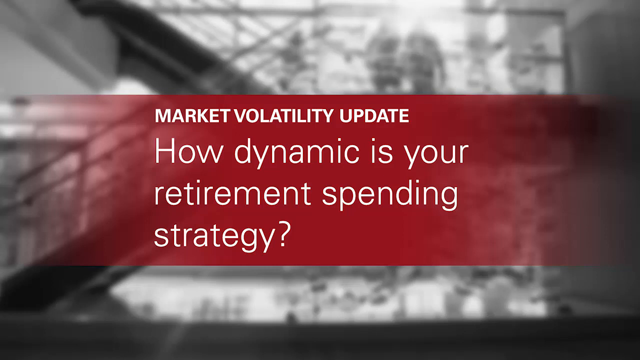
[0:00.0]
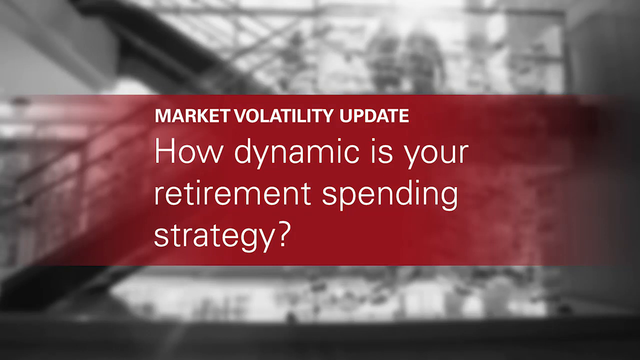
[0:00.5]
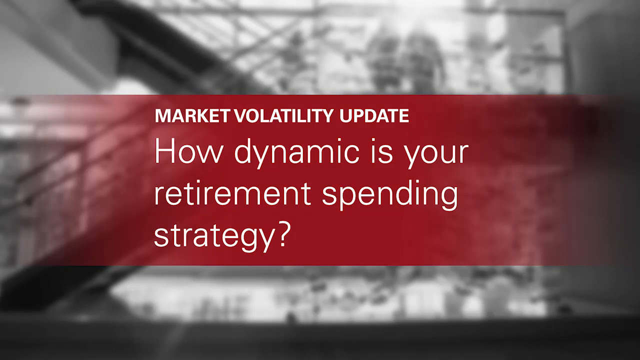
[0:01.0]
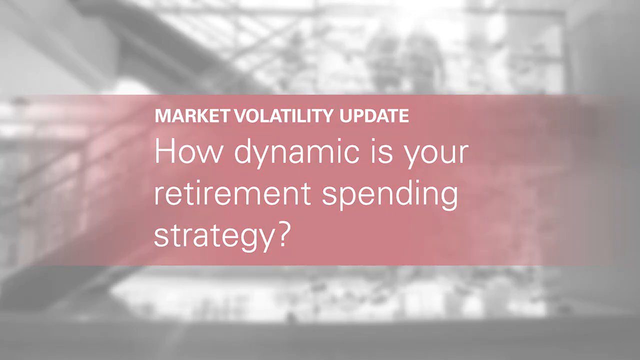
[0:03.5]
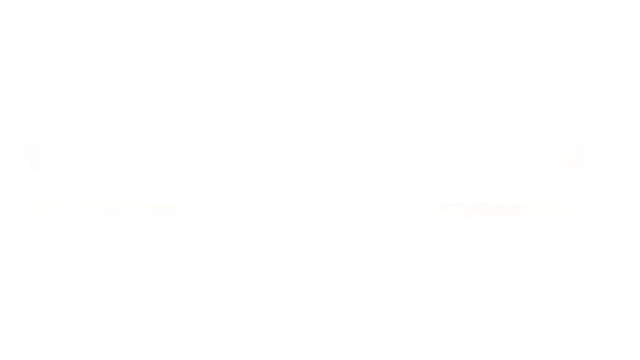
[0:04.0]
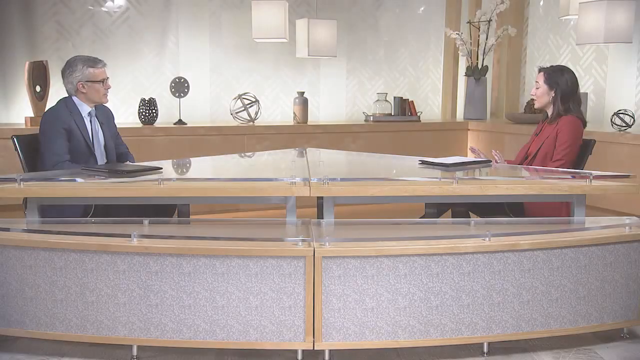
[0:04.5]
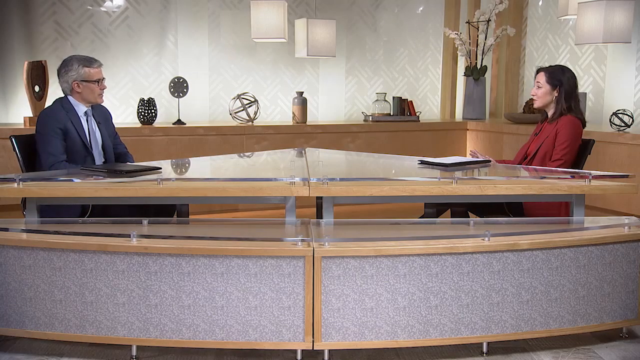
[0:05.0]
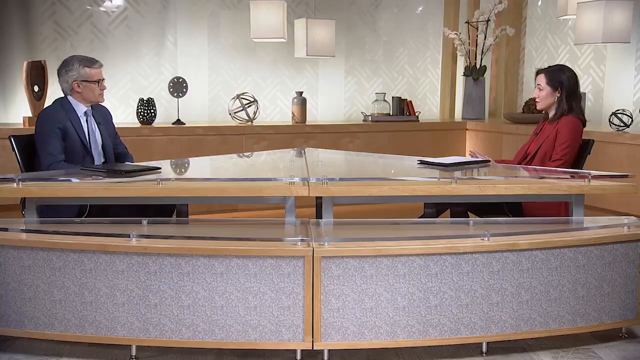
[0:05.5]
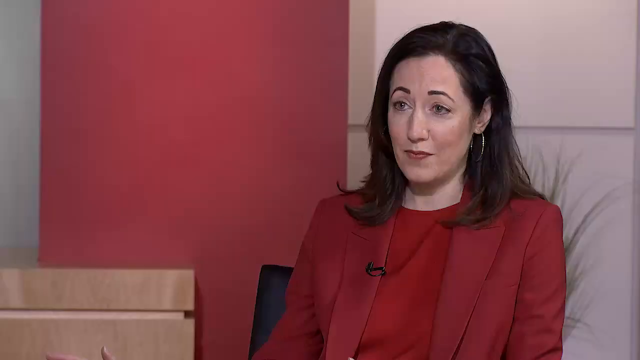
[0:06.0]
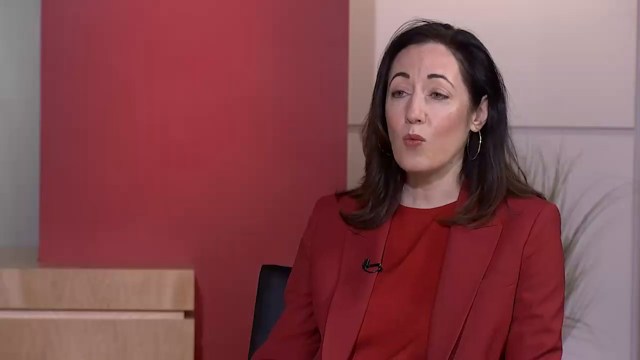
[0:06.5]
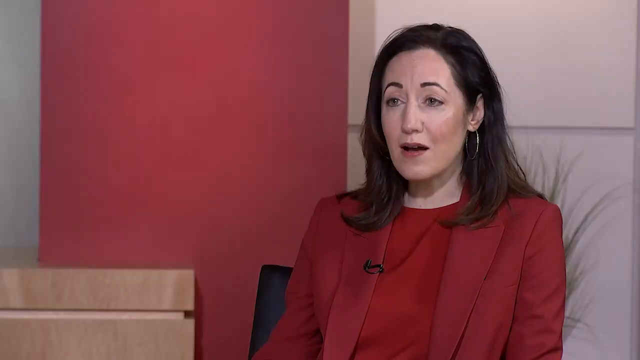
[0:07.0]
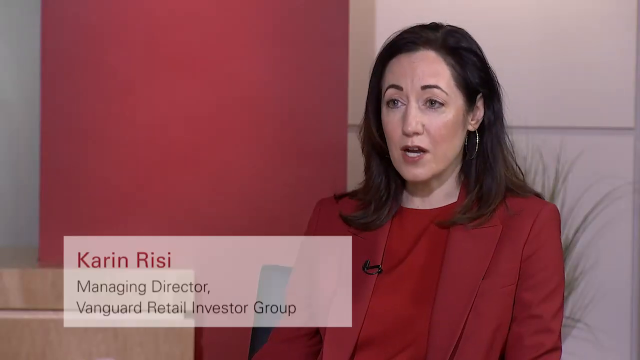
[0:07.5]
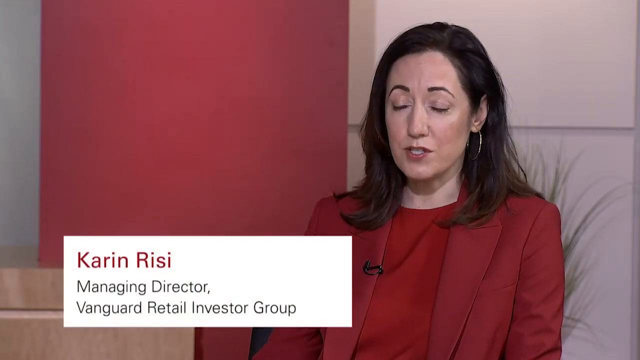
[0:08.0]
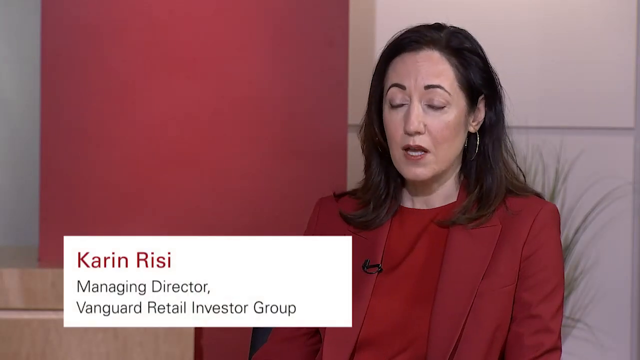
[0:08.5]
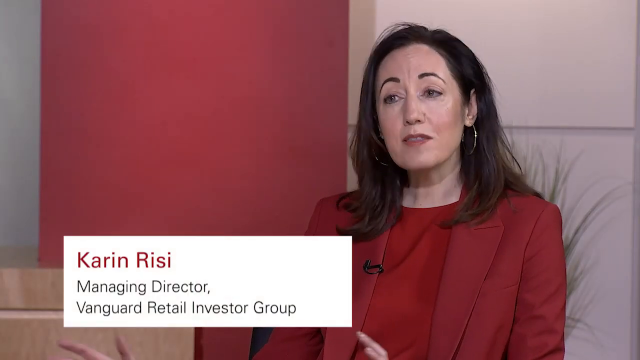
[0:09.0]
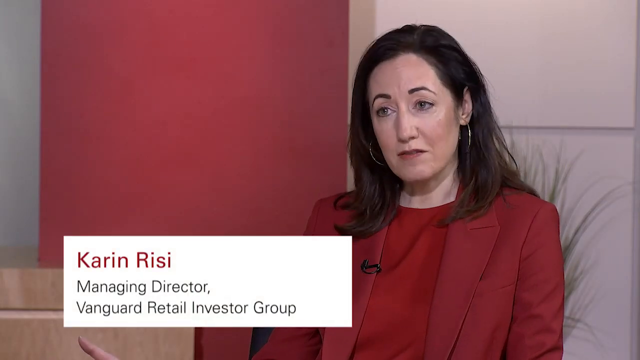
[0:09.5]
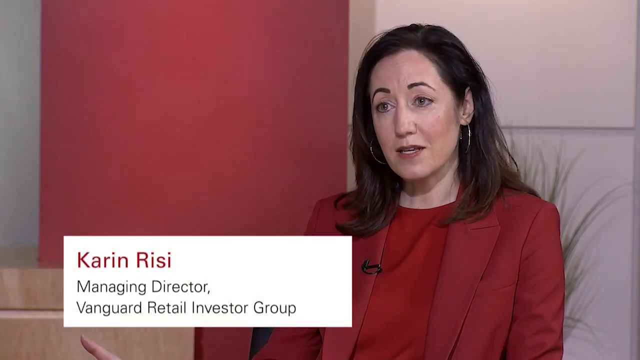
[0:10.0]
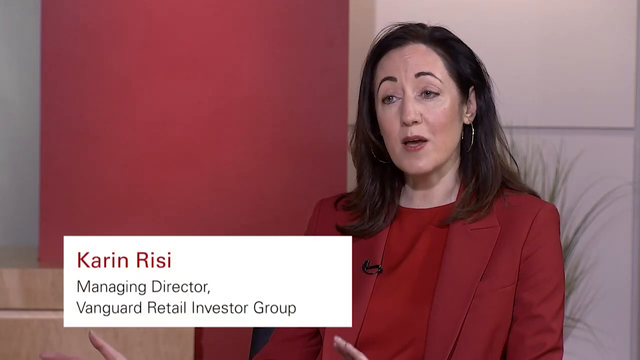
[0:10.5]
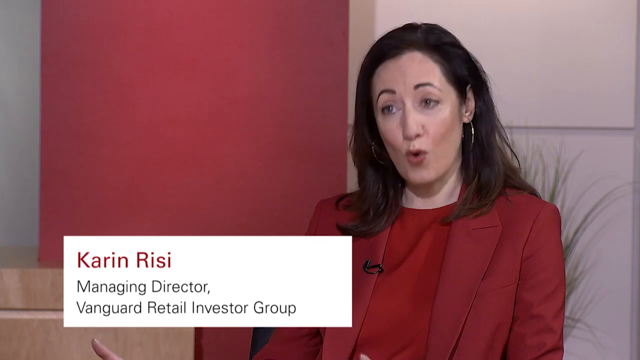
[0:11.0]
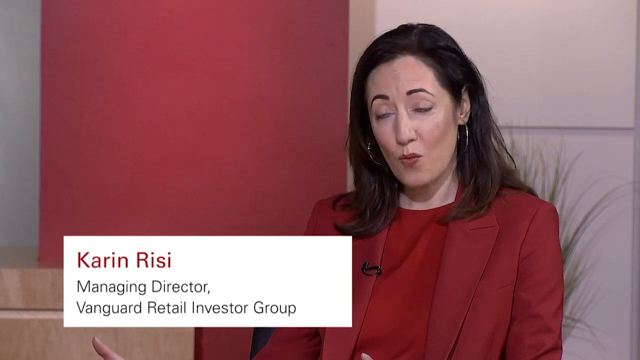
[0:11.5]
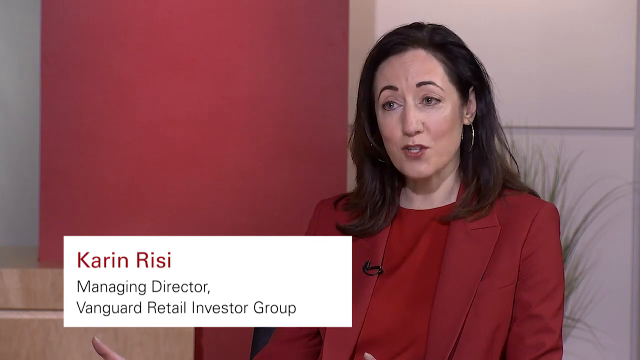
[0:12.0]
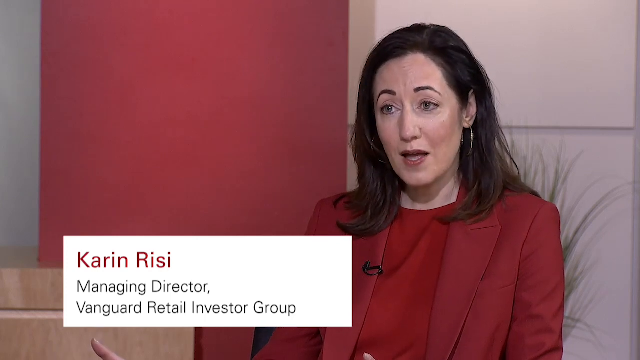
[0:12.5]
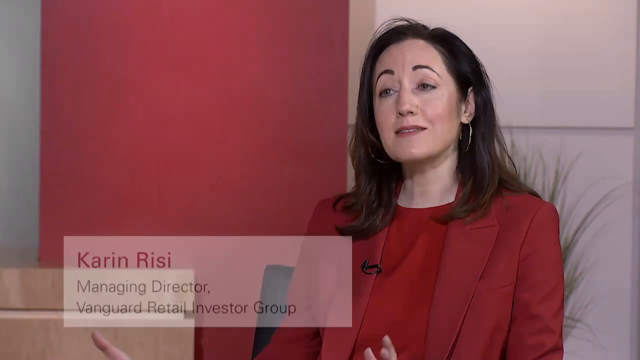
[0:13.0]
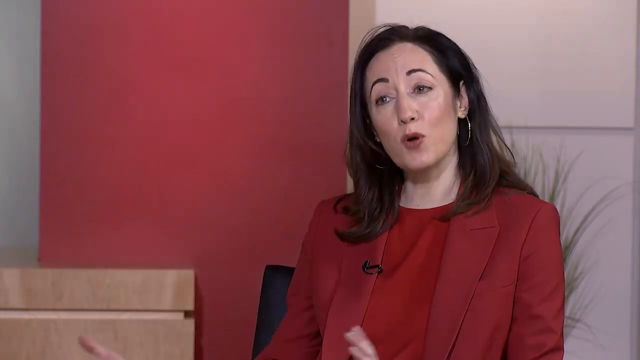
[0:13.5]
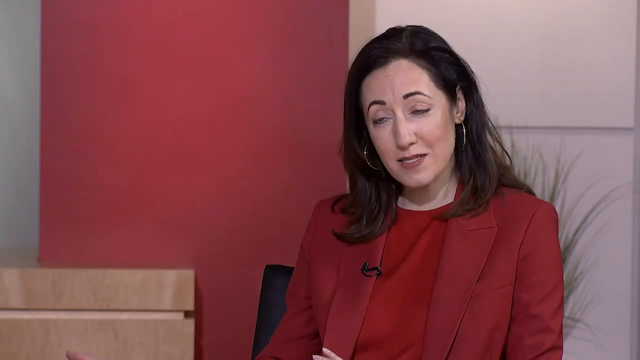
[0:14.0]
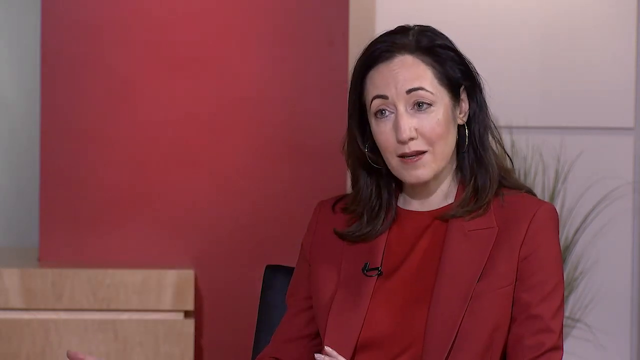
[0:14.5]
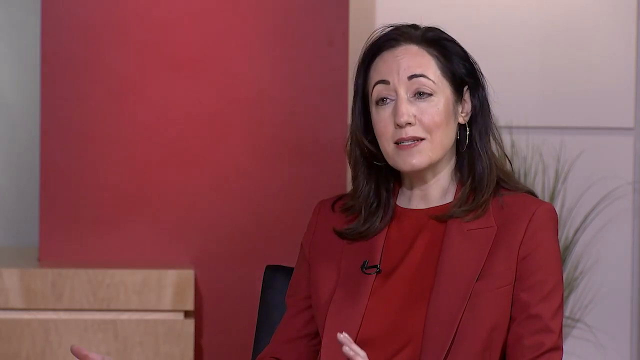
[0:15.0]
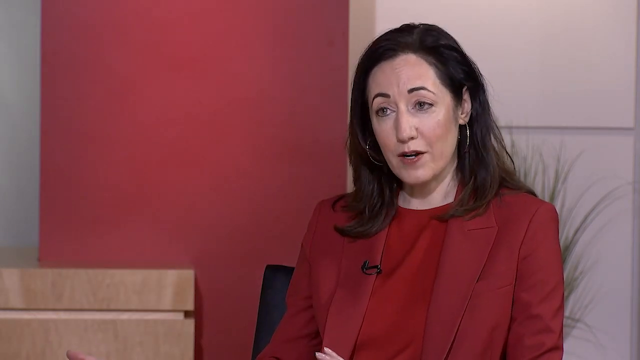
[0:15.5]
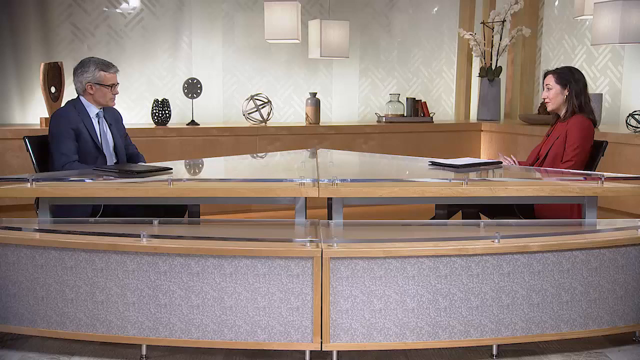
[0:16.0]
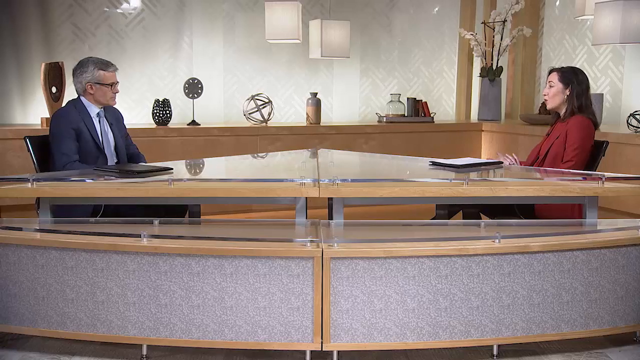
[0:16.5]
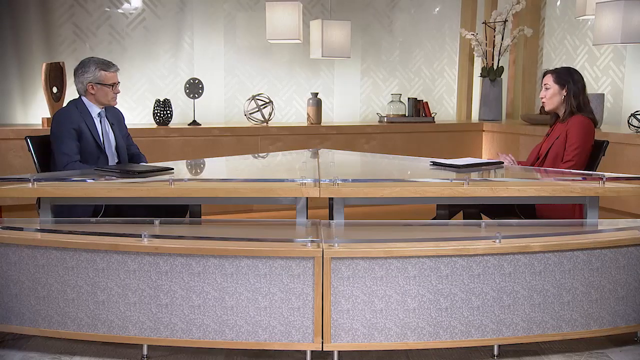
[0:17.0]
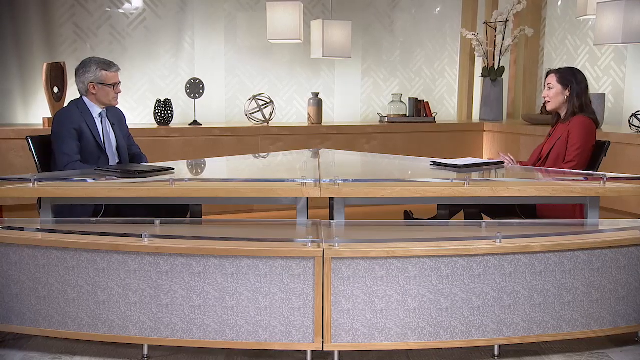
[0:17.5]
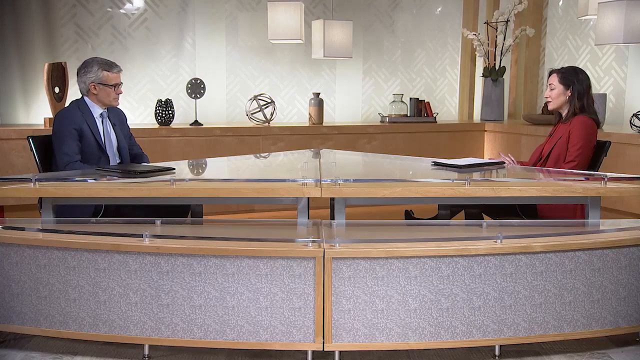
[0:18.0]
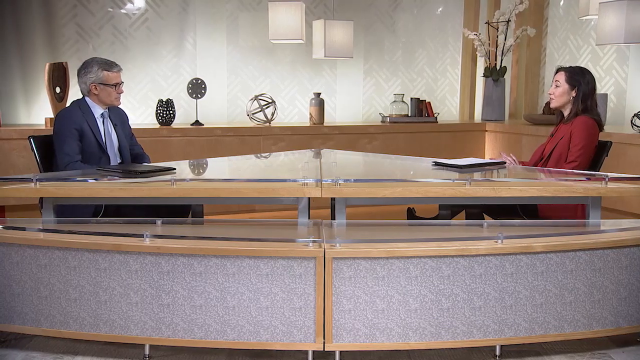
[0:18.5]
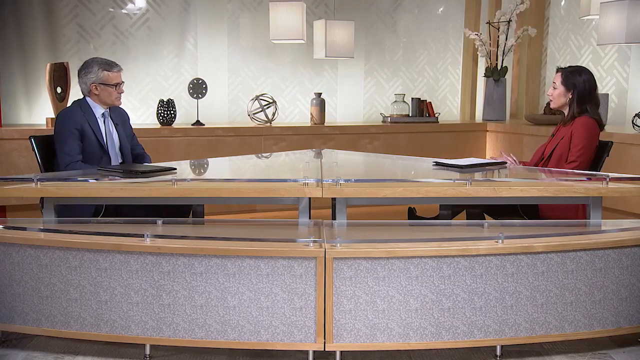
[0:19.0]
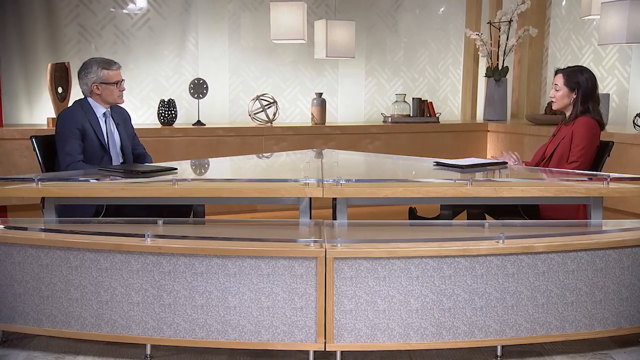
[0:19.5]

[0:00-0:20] An opening page is titled "How dynamic is your retirement spending strategy?" and is labeled "Market volatility update." After a couple of seconds it transitions to a discussion between two people in some sort of studio. They are opposite one another: a man, who is probably the host and apparently the interviewer, and a woman, the guest. Her name, Karen Rizzi, appears on a label on the screen in red, and she is the managing director of Vanguard Retail Investor Group. She is dressed all in red and begins talking, presumably after being asked a question. The man wears a blue suit jacket, a light blue tie and black-framed eyeglasses.